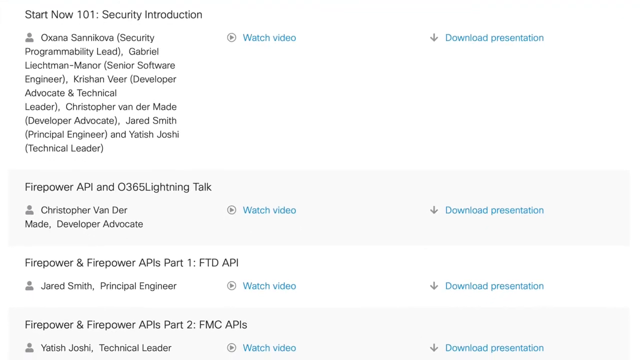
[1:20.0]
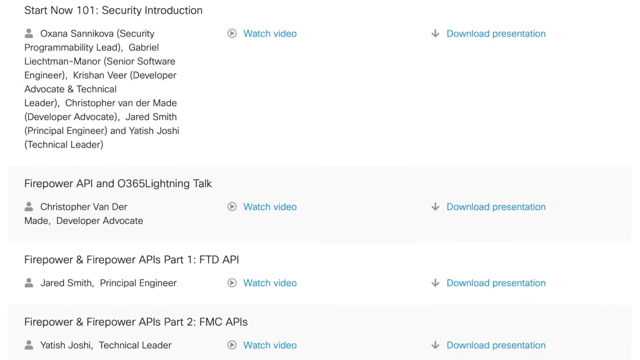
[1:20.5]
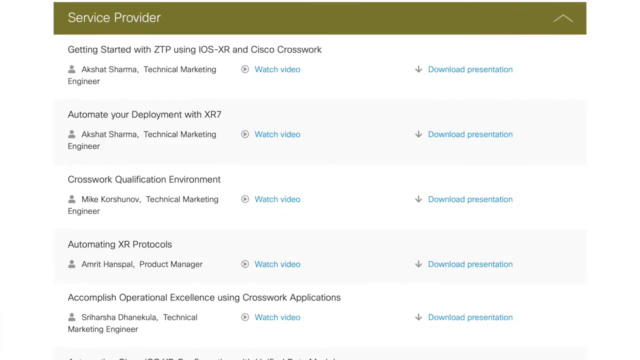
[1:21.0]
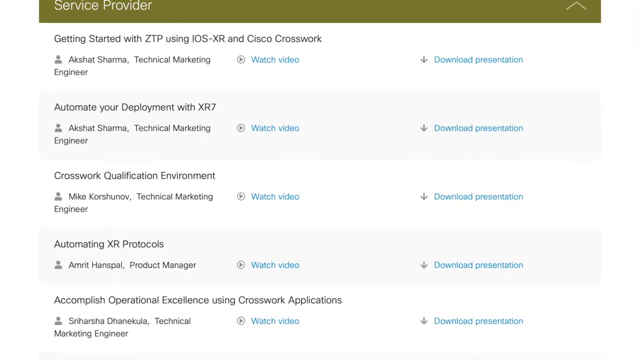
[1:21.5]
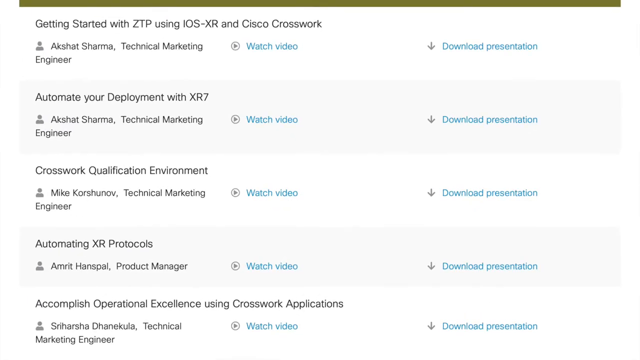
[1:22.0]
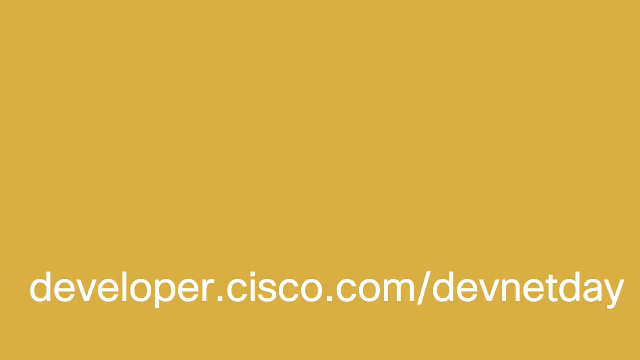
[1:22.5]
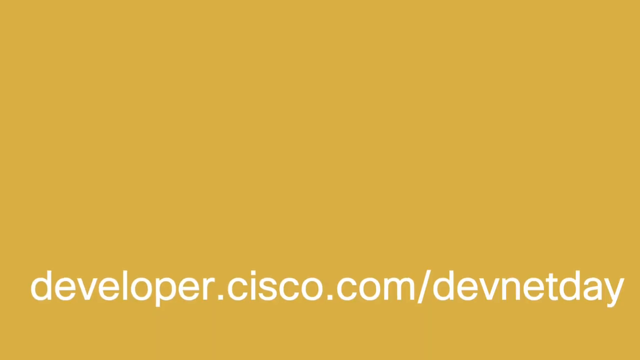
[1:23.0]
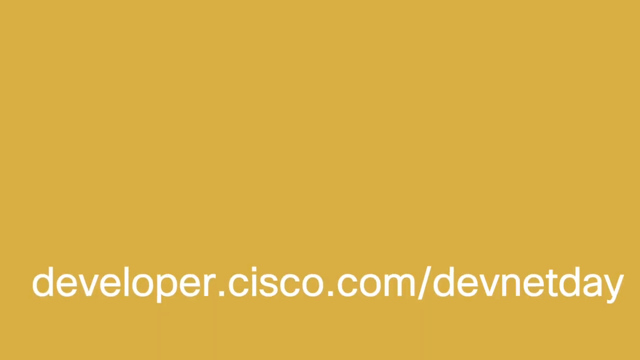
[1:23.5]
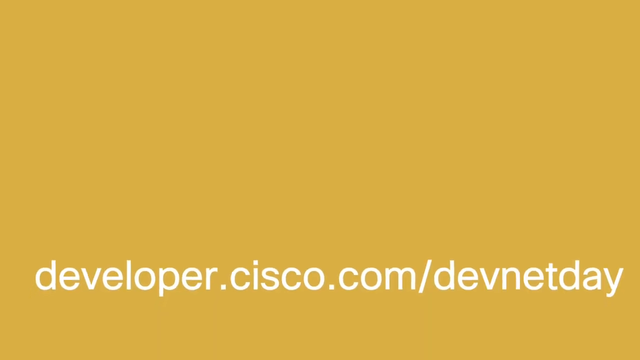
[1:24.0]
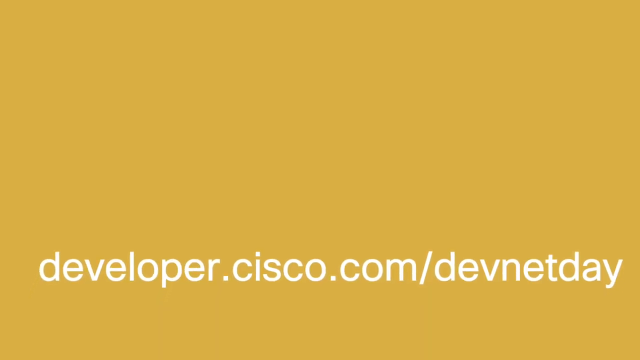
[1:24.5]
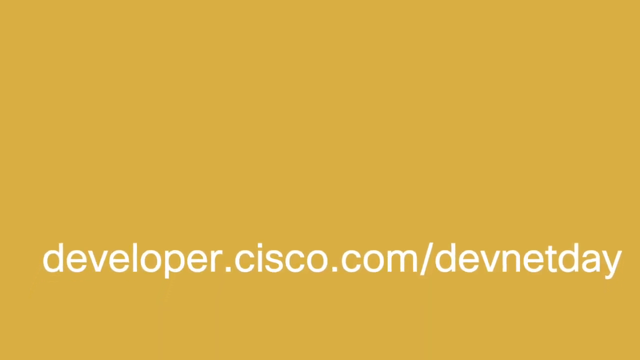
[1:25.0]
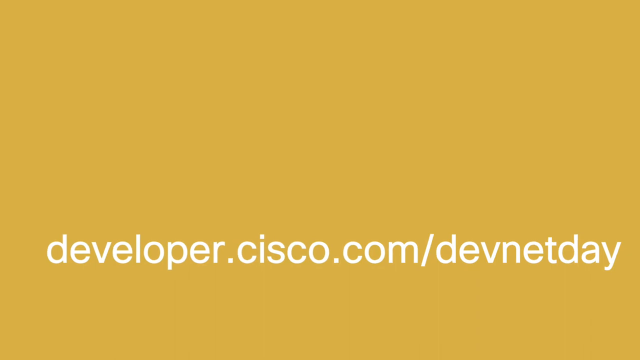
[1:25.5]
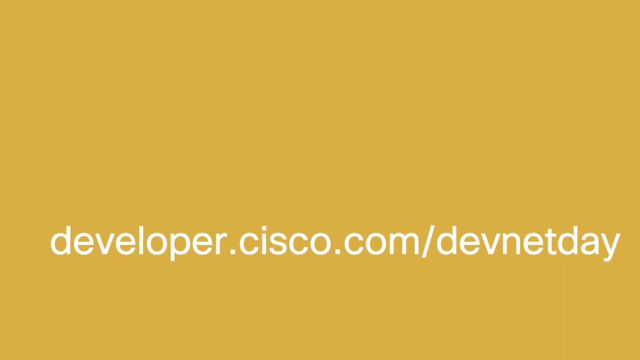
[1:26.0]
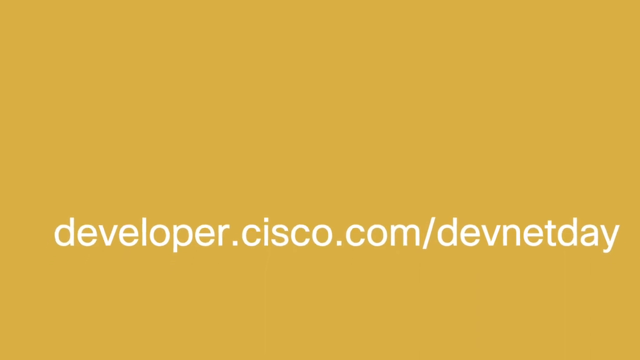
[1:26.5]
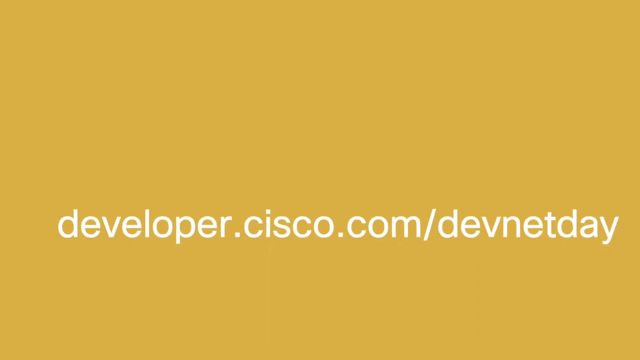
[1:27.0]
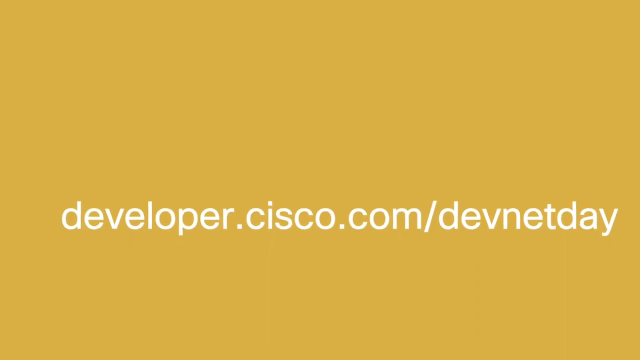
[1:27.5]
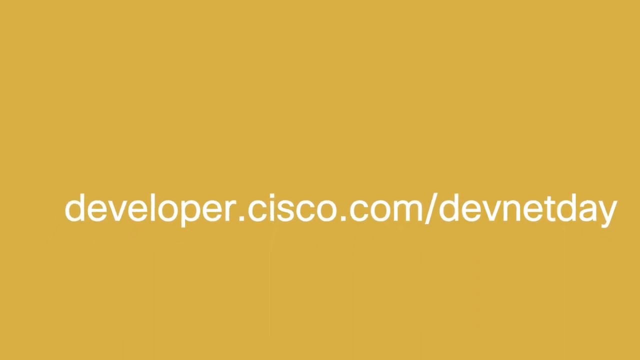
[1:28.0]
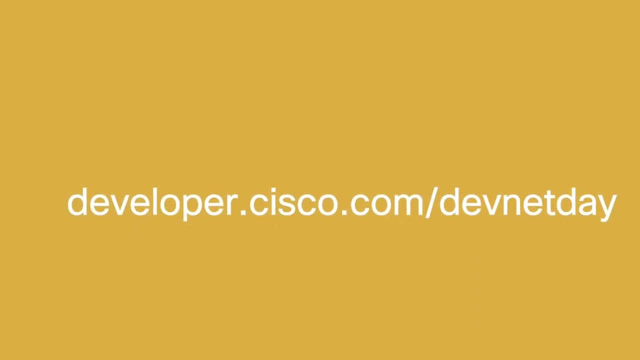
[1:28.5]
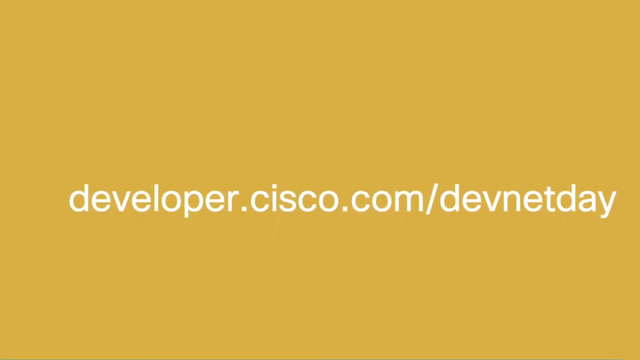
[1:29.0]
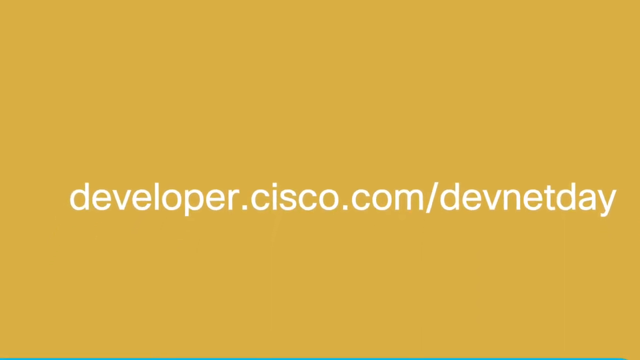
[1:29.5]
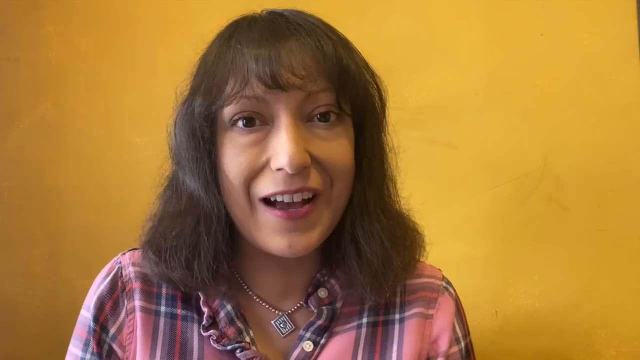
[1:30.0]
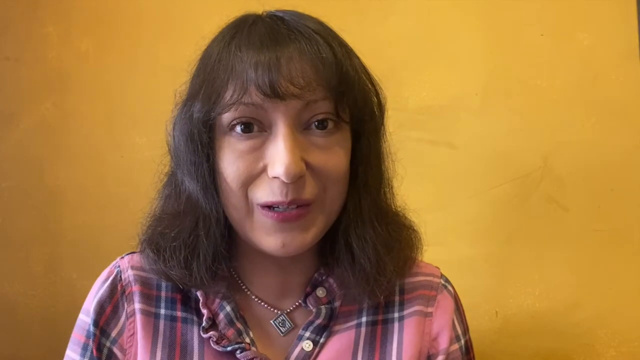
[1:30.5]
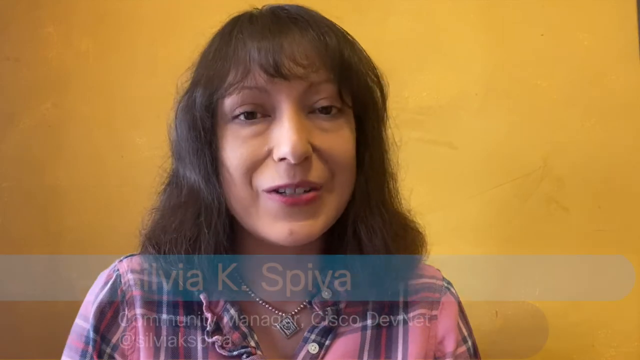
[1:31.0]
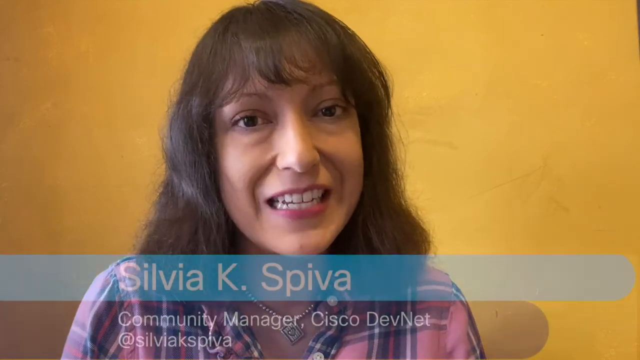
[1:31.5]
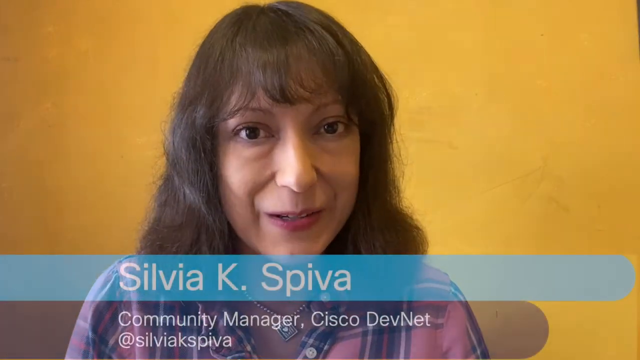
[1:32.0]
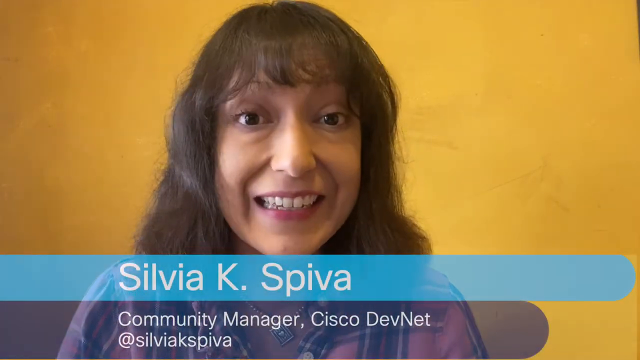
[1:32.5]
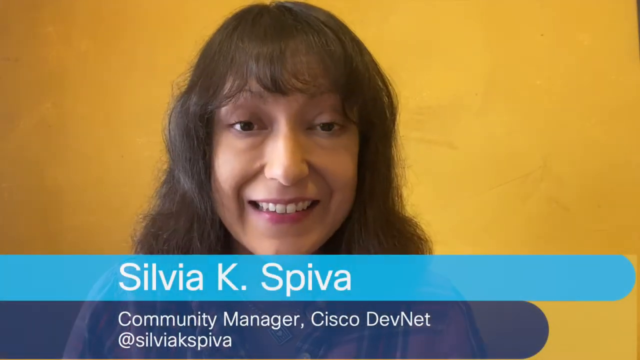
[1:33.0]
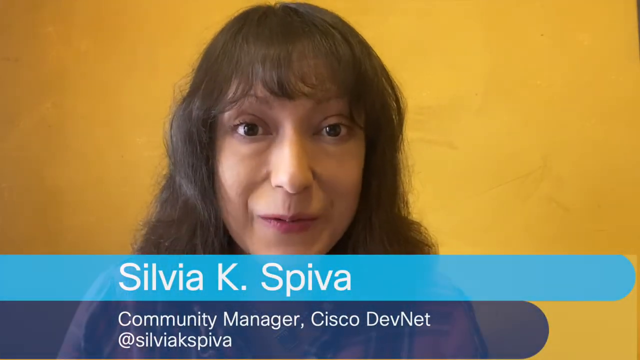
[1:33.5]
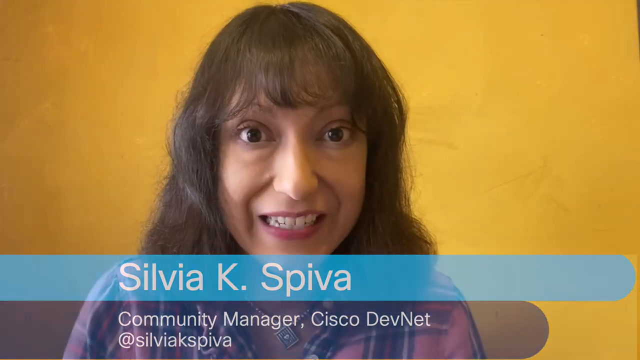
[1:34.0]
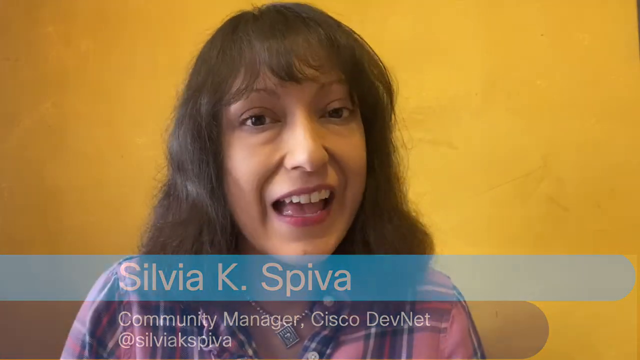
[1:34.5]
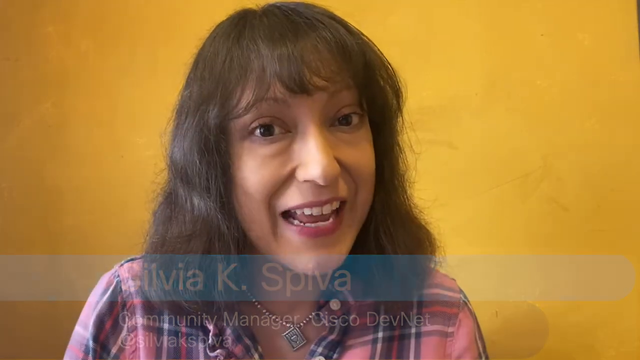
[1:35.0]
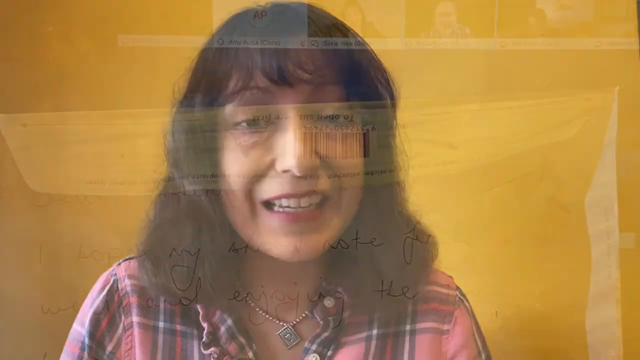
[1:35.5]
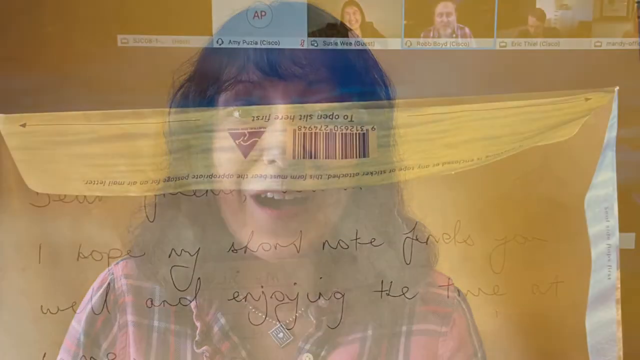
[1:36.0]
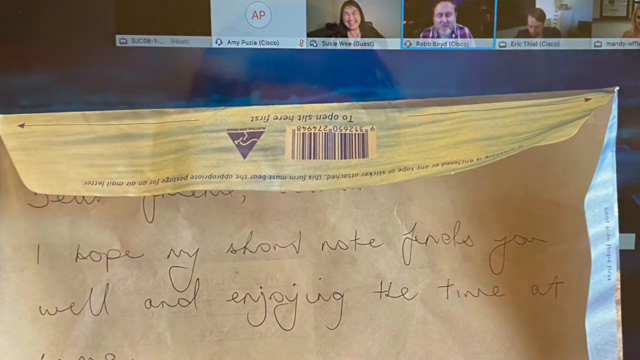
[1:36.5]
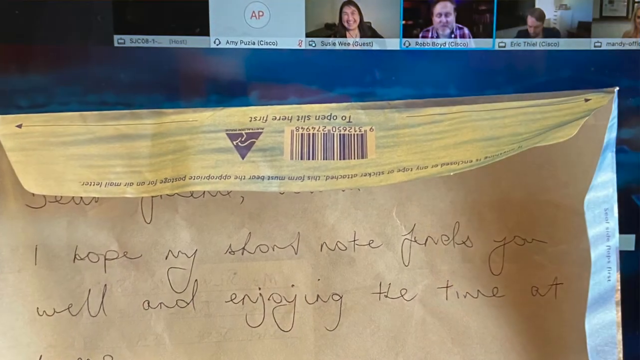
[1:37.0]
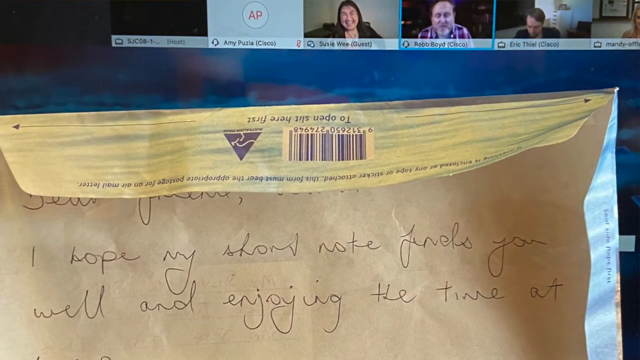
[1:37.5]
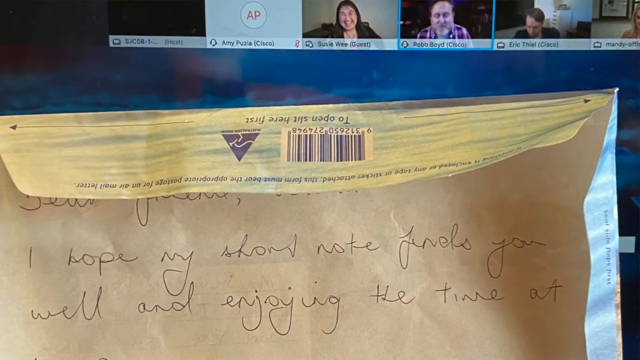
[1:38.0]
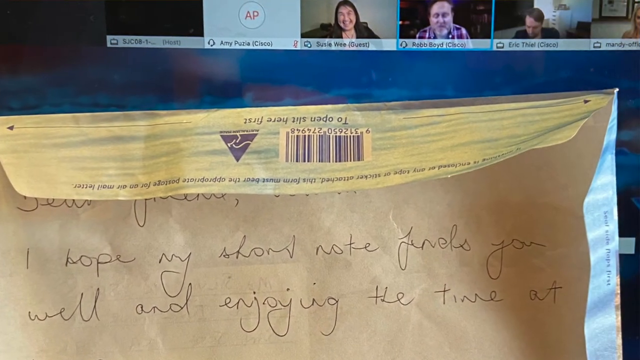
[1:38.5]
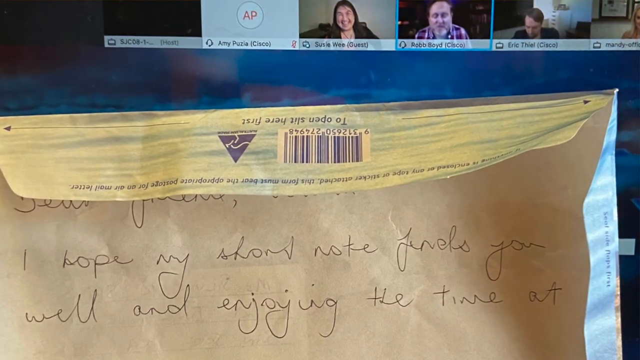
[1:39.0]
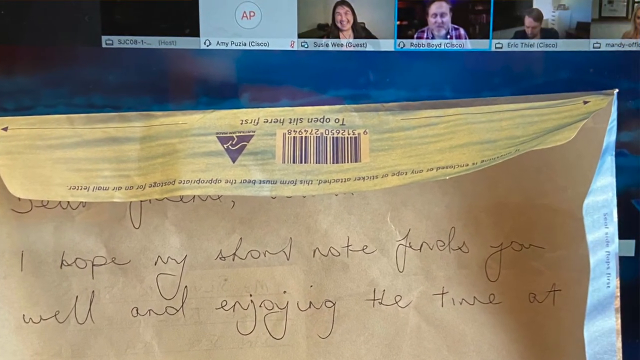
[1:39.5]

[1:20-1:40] A page shows "start now" and a security introduction about the security provider in small letters, moving toward the viewer, along with an entry on getting started with VTP using IOS XR. A gold page then shows "developer.cisco.com." Next, Sylvia Kate Spivey pops up: a Caucasian woman with brown hair flowing down past her cheeks to her shoulders. An envelope appears with the note "I hope my short note finds you," and the view zooms in. The top flap of the envelope is yellow and the right side is blue; the flaps fold in toward the middle about half an inch and have oval, rounded tops, and another flap is an oval half circle folding in about half an inch. The lettering is in cursive, written in black pen. Then the view returns to words moving toward the viewer in three columns: the first tells what the item is, the middle is watch video, and the last is download the presentation.